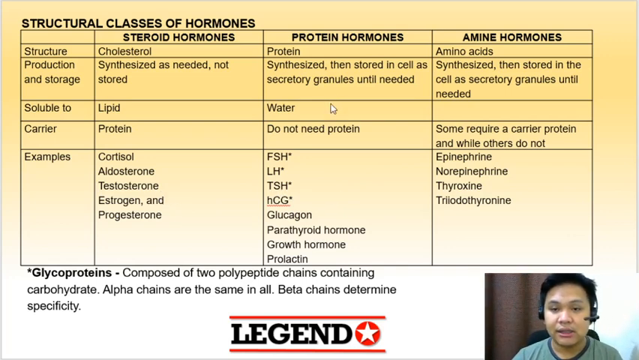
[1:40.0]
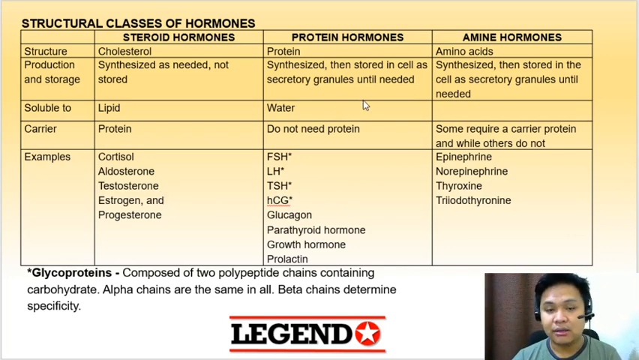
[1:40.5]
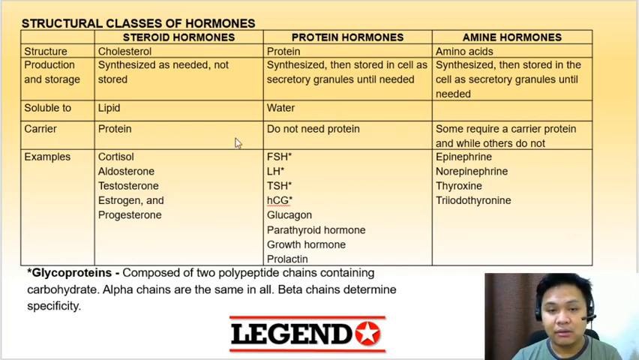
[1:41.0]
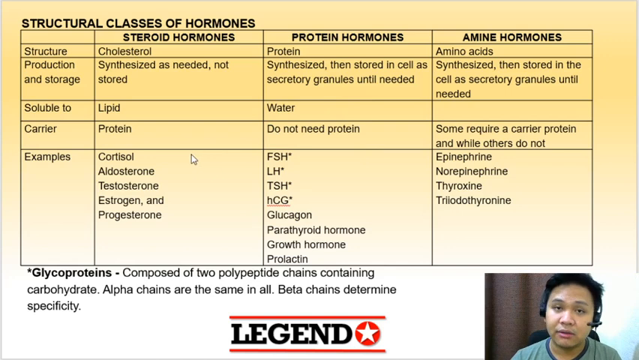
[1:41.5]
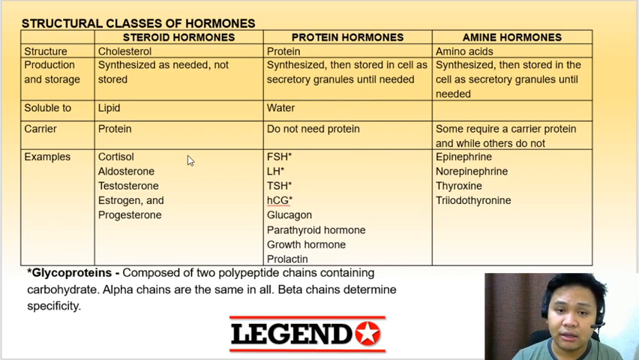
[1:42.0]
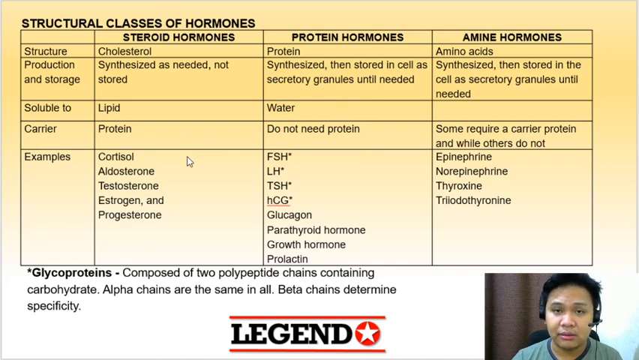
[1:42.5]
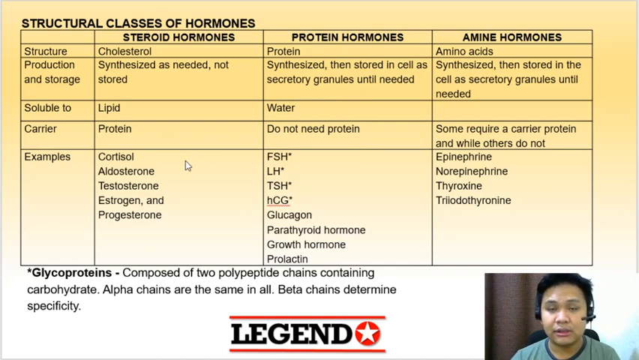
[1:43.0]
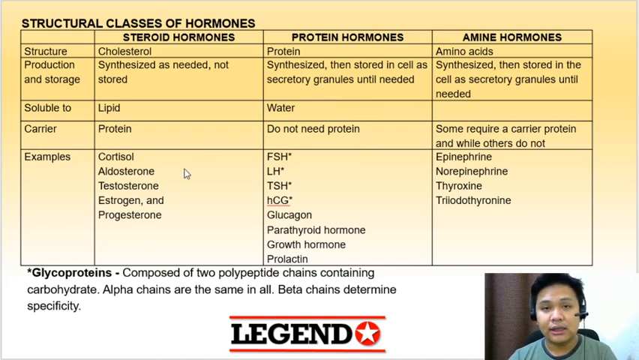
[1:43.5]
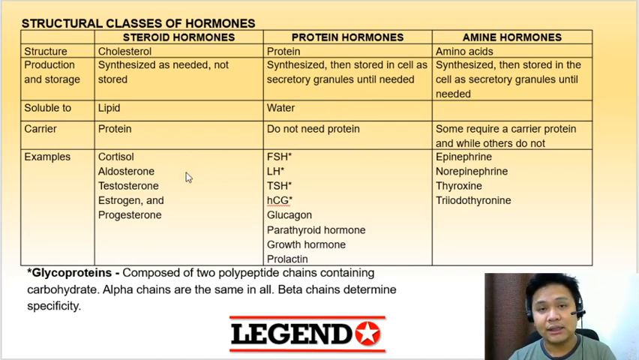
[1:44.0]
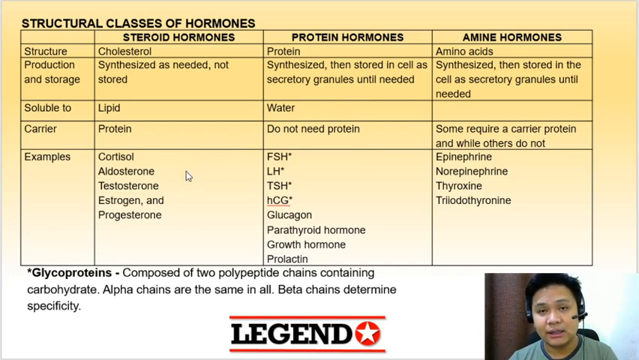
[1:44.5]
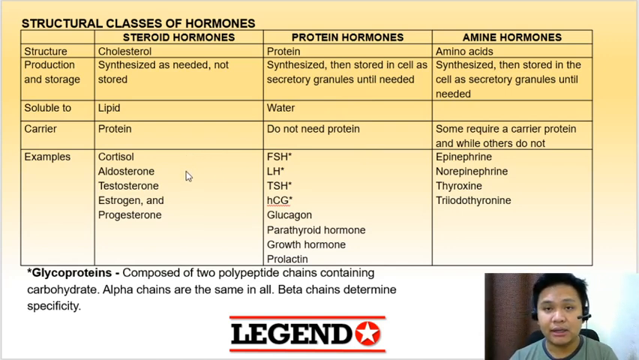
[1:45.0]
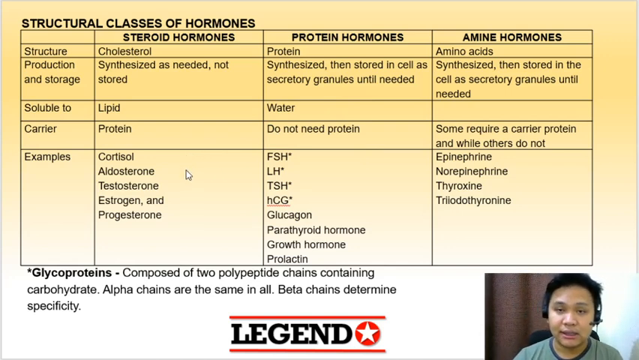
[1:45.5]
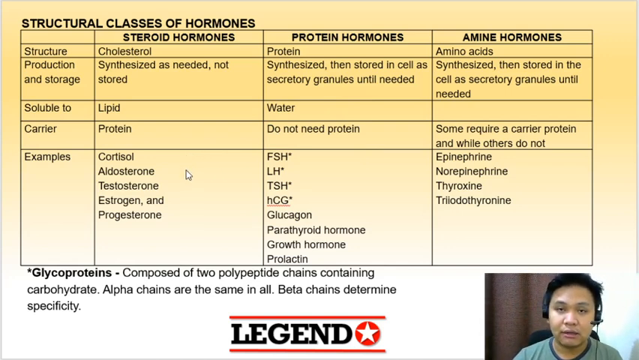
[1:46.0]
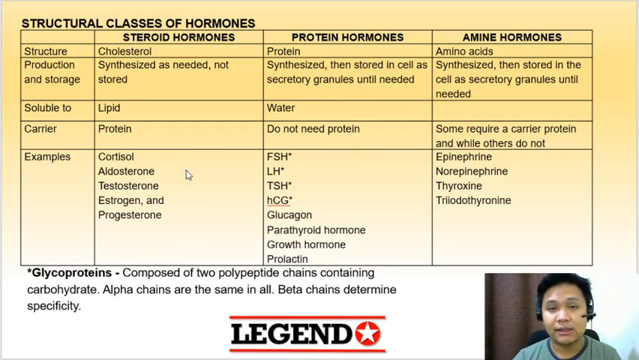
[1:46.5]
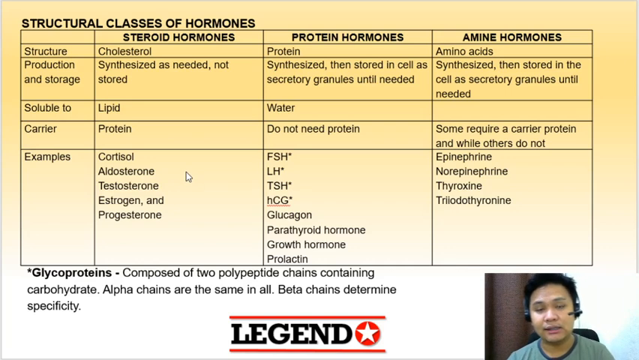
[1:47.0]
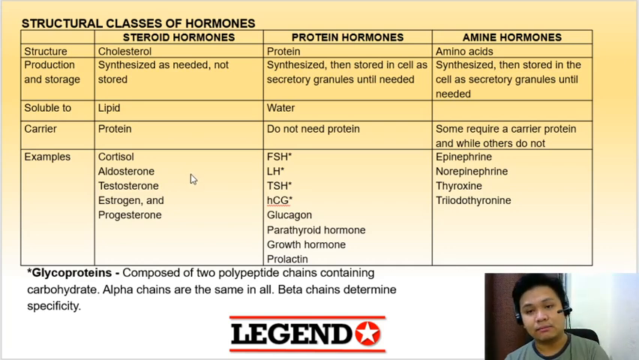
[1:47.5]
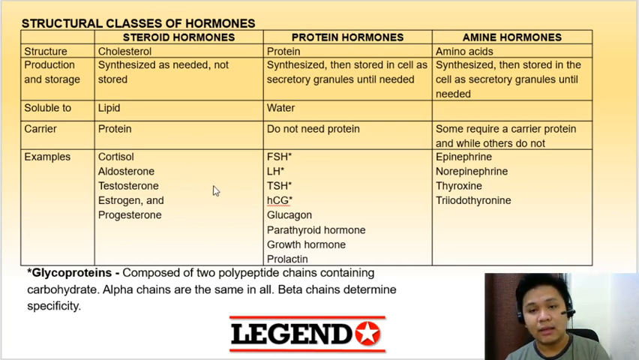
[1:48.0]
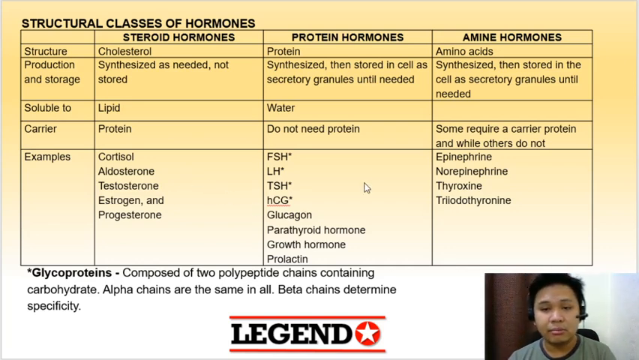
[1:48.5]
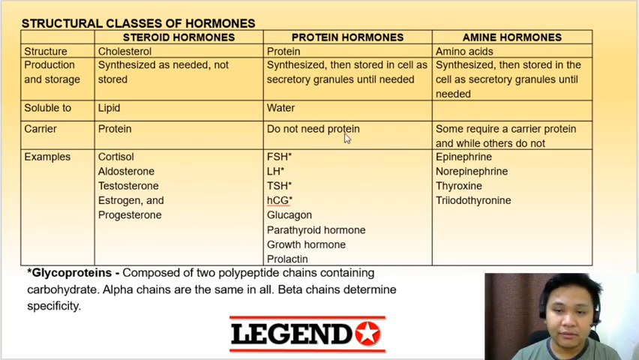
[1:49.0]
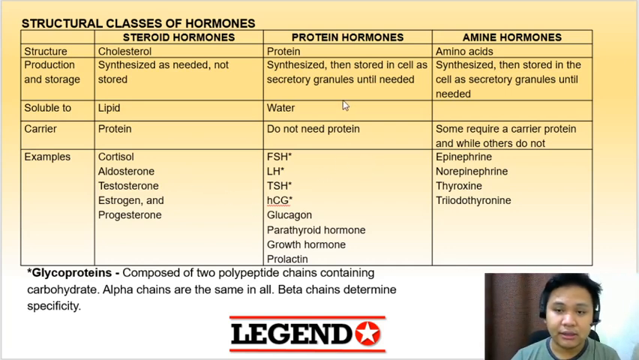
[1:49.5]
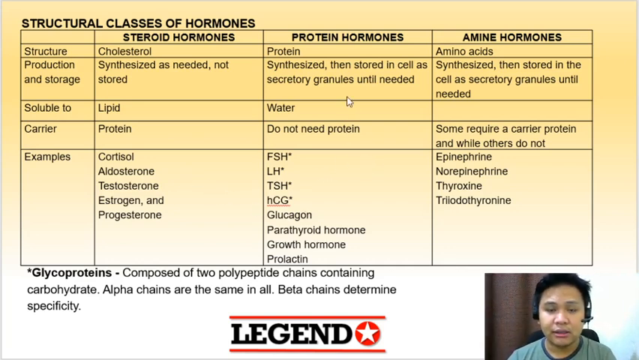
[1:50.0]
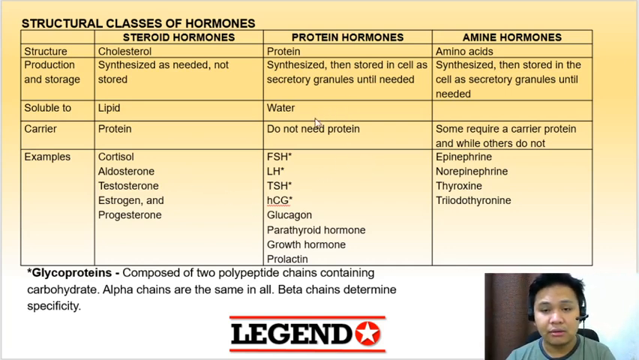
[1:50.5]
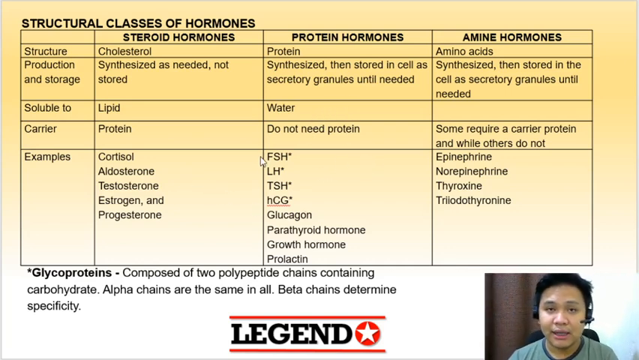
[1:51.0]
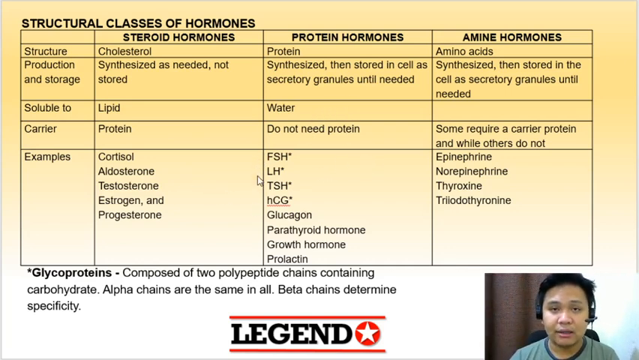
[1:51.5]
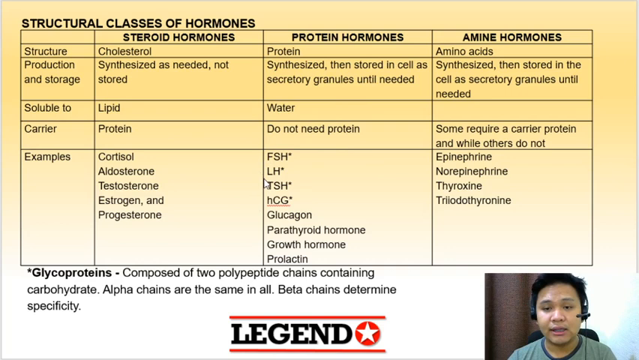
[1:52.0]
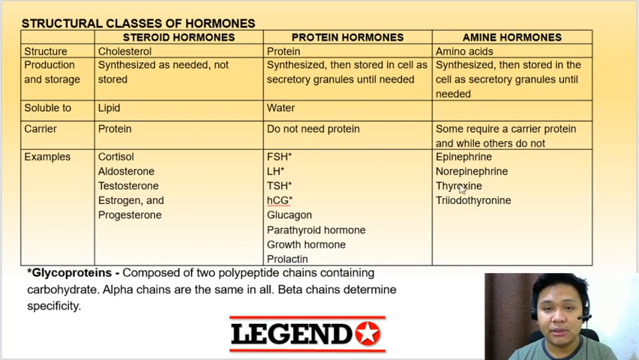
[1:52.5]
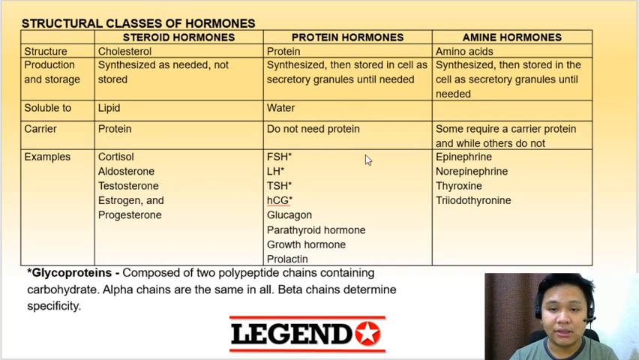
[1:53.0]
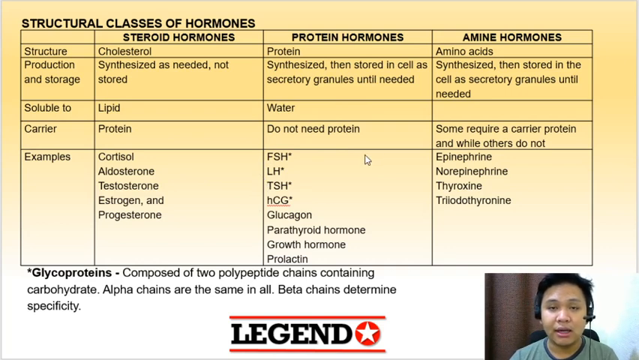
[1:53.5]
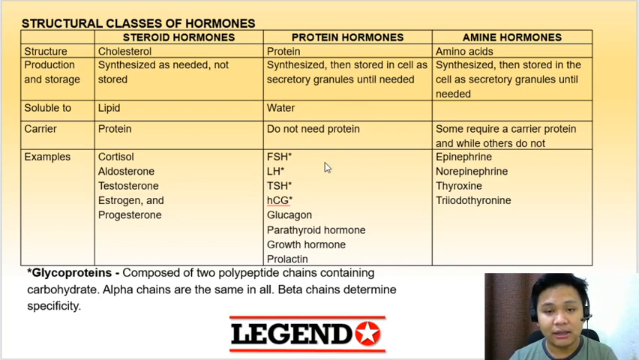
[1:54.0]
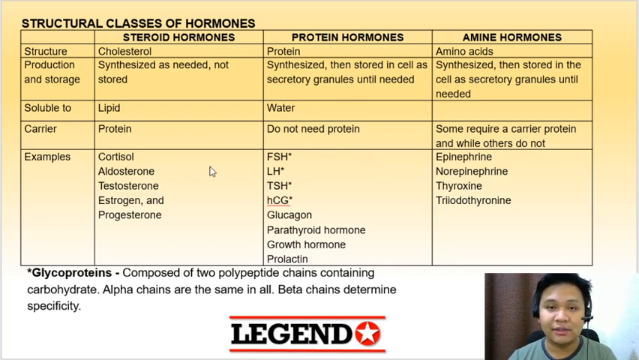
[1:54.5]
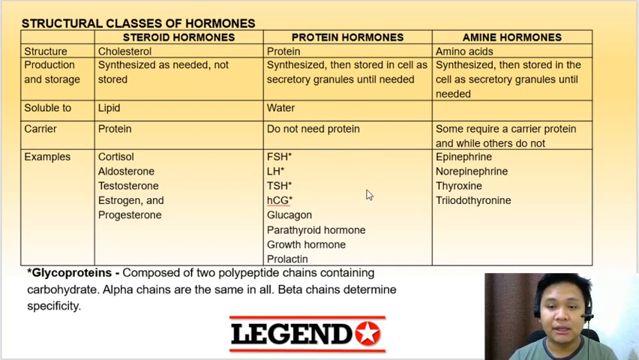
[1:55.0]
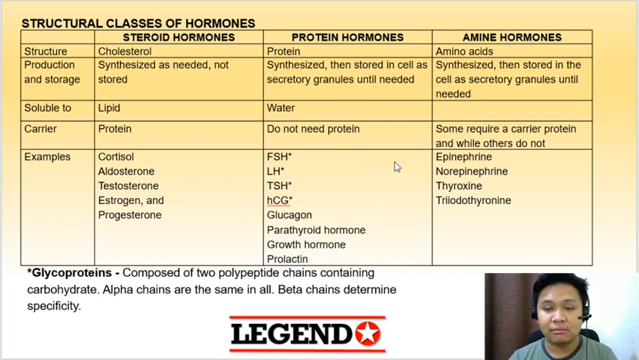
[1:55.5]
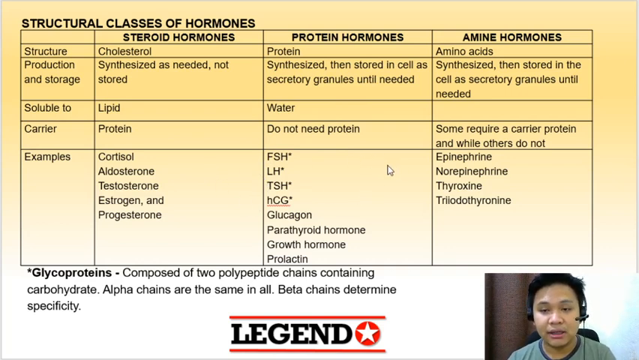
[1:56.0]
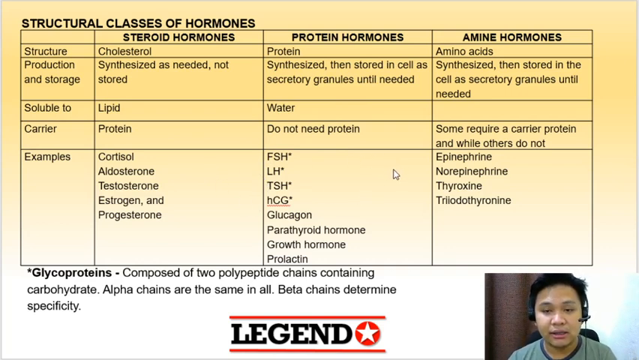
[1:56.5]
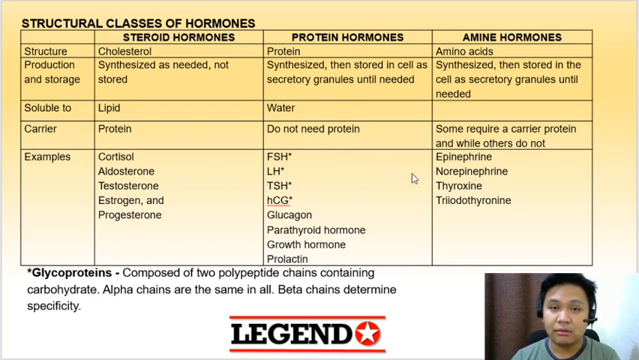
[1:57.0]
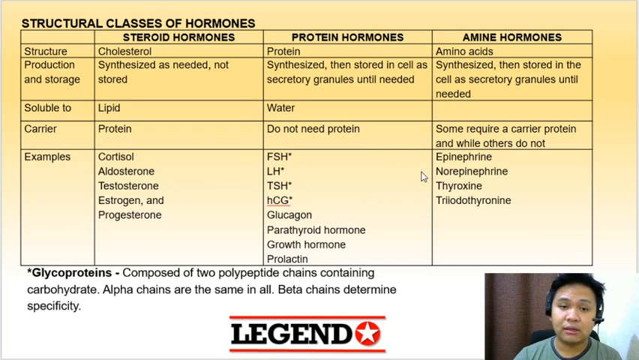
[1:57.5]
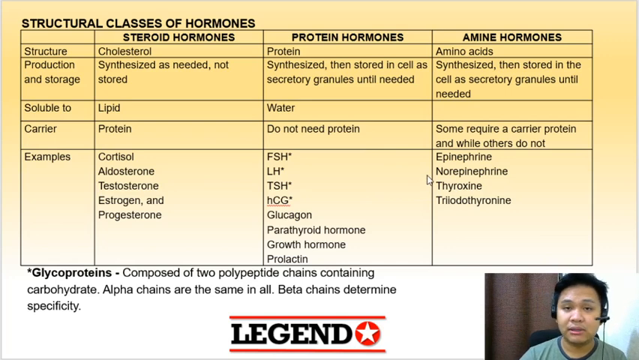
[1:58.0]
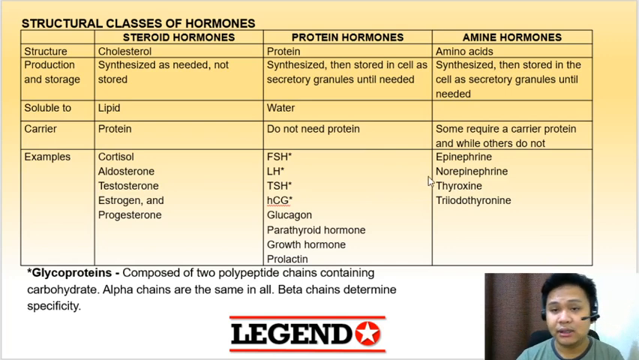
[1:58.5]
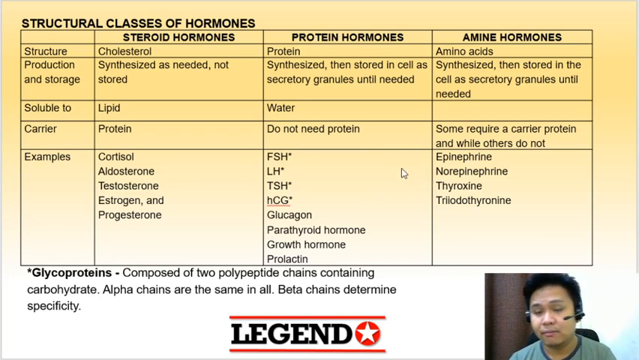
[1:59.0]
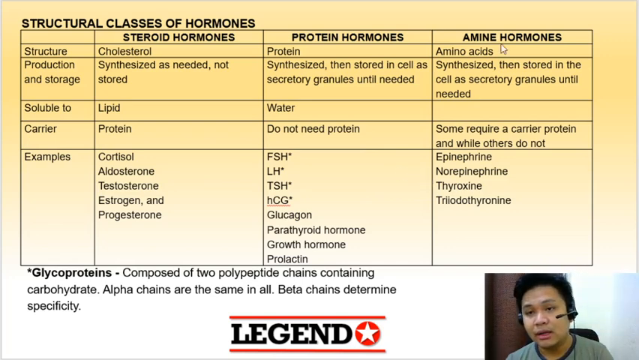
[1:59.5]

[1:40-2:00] The table on the structural classes of hormones remains on screen. A man in the bottom right corner appears to be talking about the hormones and the information presented, and he seems to work for a company perhaps called Legend. At the bottom is a Legend logo in black capital letters, with a round red circle containing a five-pointed white star next to the word, and a red line above and a red line under the logo. The man appears to be sharing his computer screen, as the mouse arrow moves across the screen over the information. The table covers steroid, protein and amine hormones, presenting the production and storage, solubility, carrier and many examples of each.